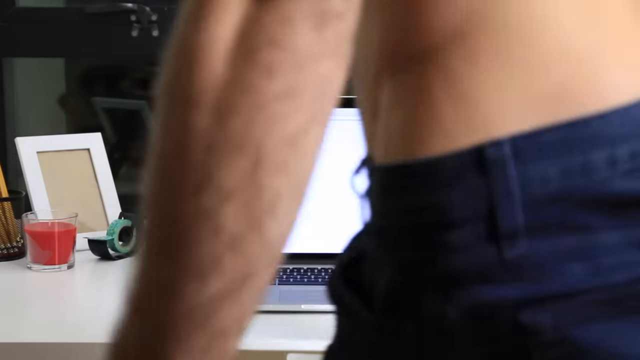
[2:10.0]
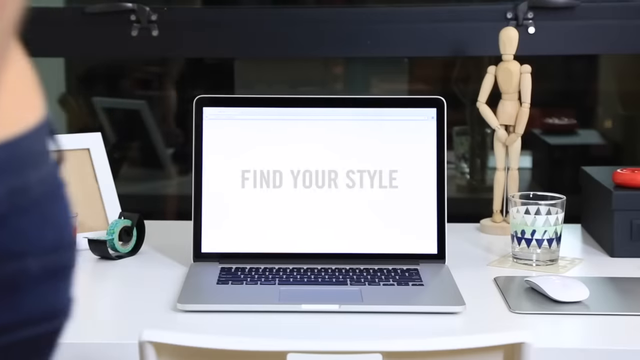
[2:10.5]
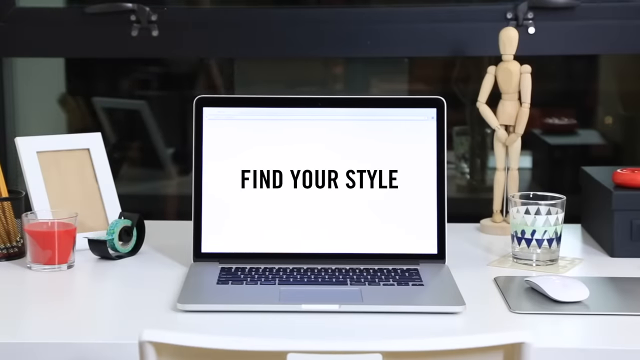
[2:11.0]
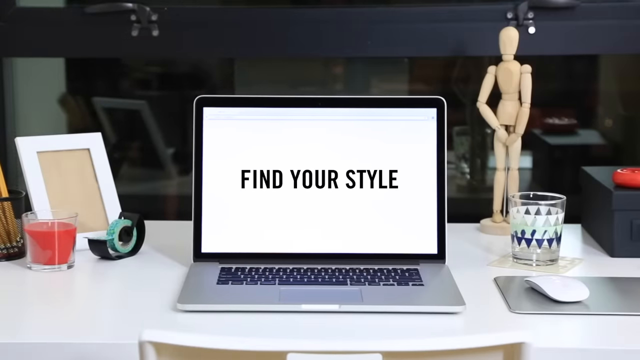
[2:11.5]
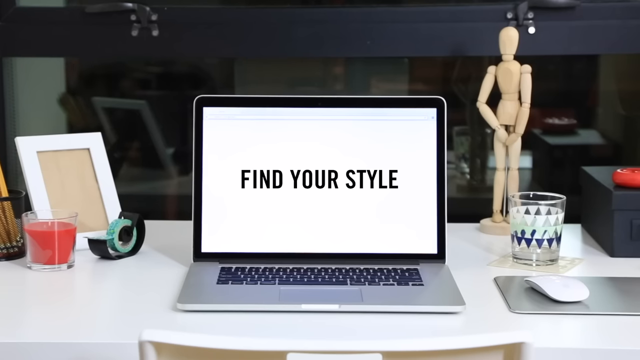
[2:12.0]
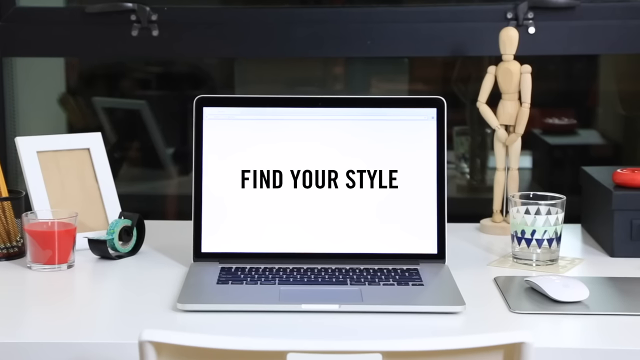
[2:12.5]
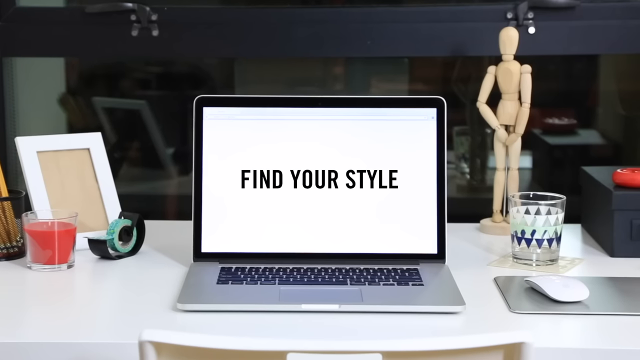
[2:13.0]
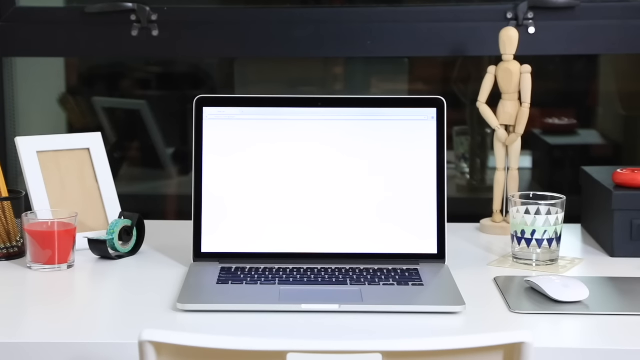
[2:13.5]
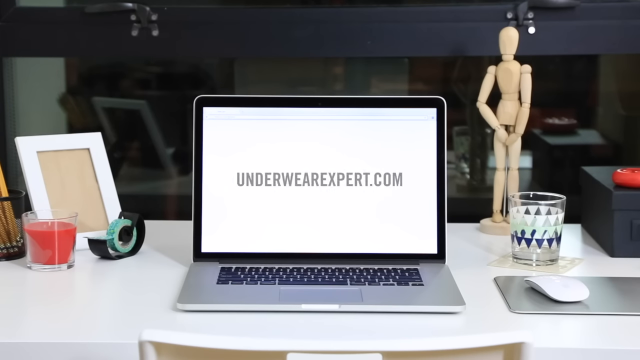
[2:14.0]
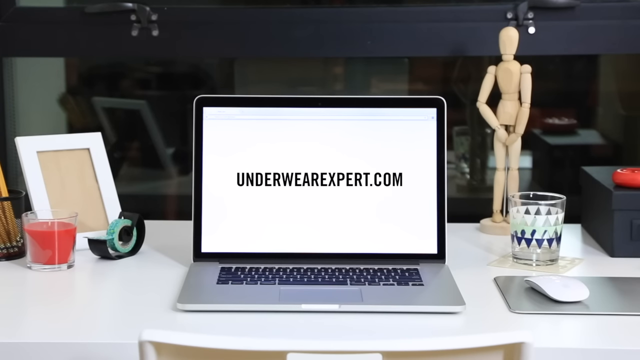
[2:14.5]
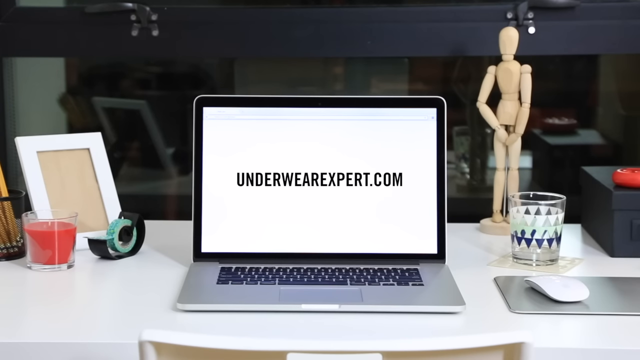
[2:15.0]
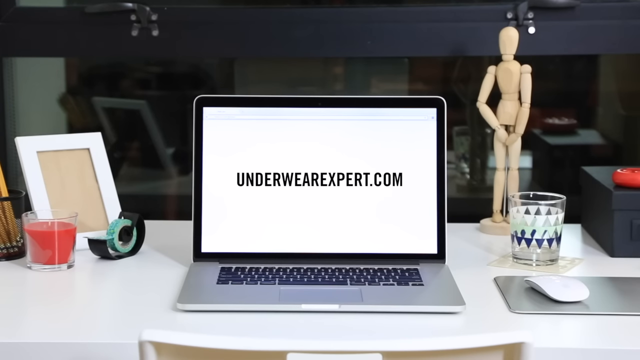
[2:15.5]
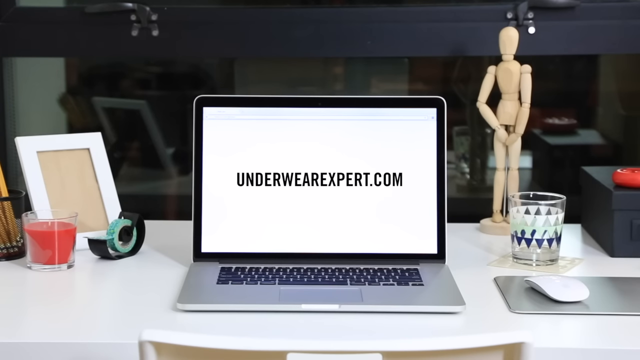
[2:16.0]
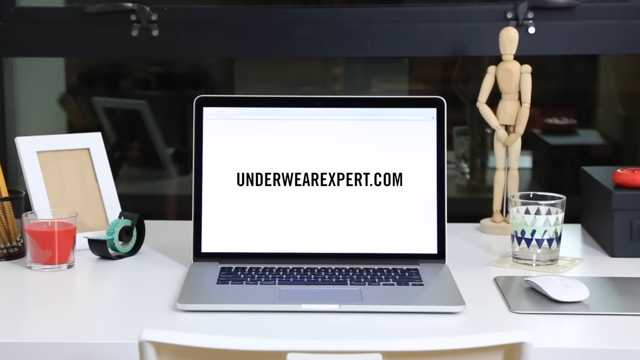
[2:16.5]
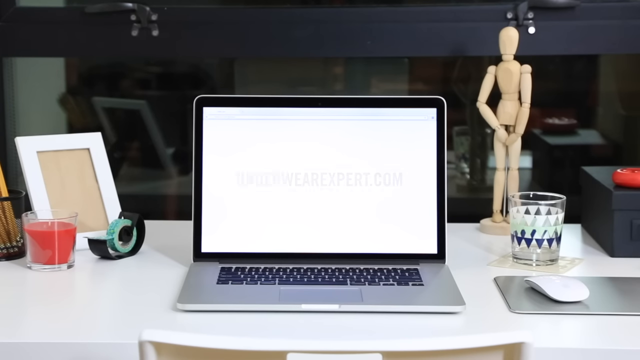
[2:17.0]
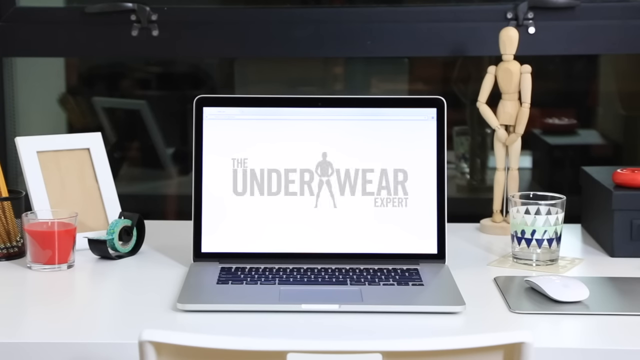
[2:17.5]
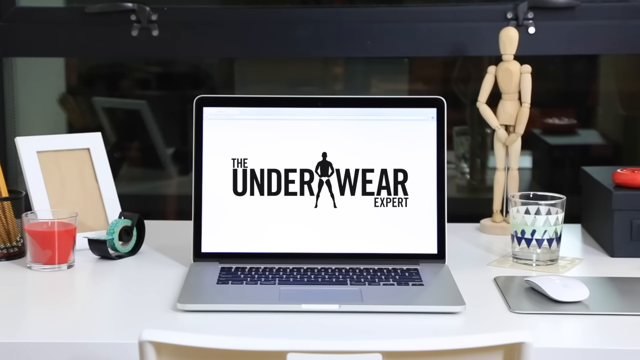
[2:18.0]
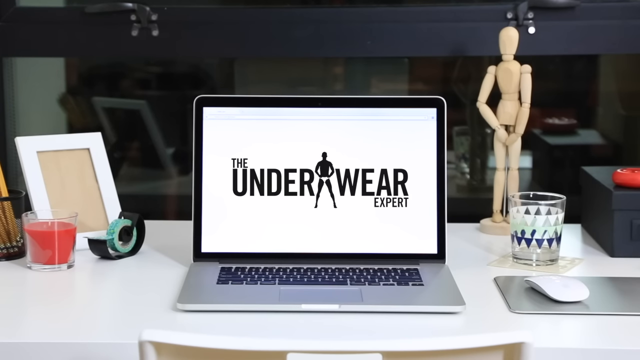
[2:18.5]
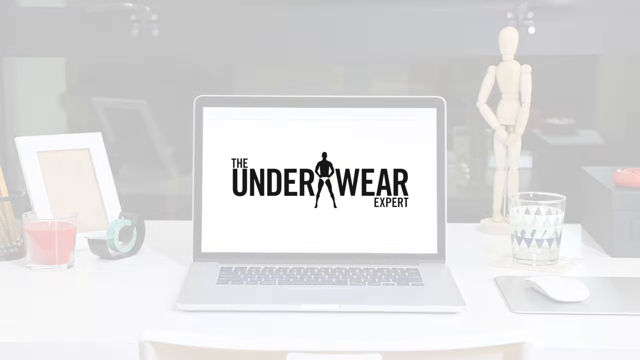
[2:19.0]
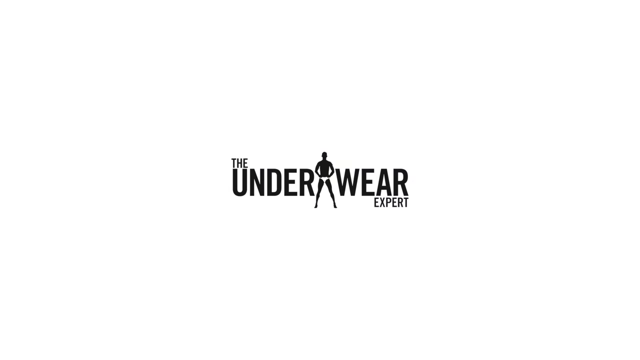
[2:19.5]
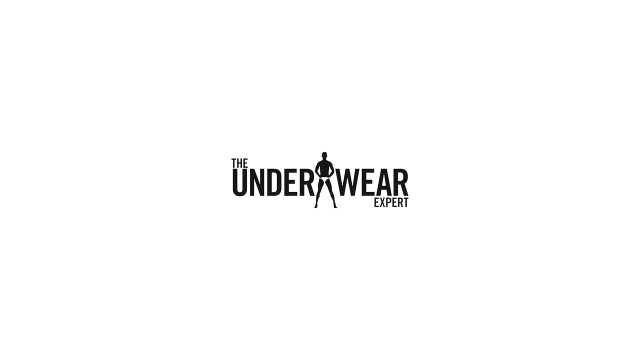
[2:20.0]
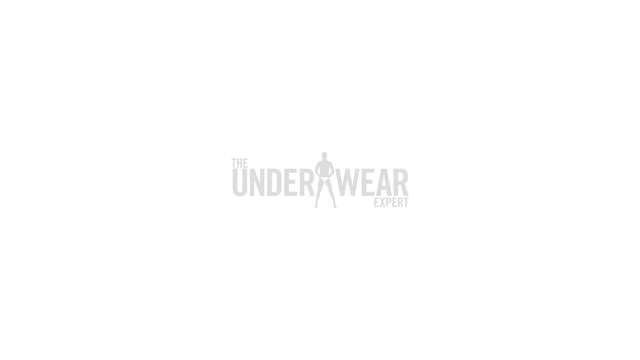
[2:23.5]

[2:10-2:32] The man, wearing only a pair of shorts with nothing on his upper body, stands up from his seat and walks in front of the laptop. The laptop screen is left displaying words on a white background, the first ending in "your style", and then text reading "underwear expert.com". At the end, the headline "the underwear expert" appears on a white background, with an illustration of a man in white underwear between the words.